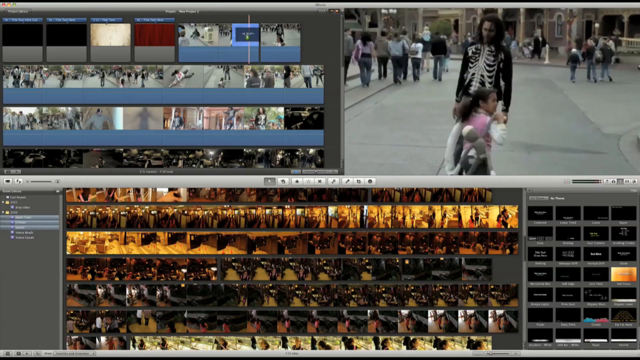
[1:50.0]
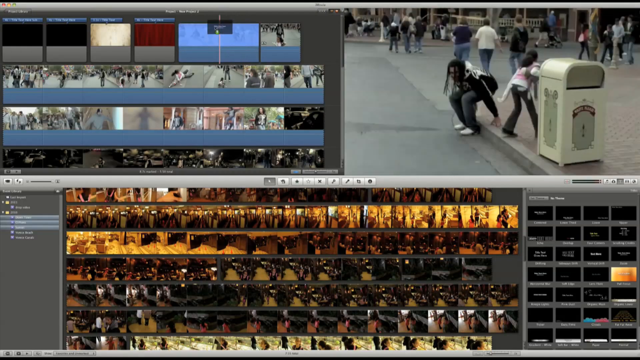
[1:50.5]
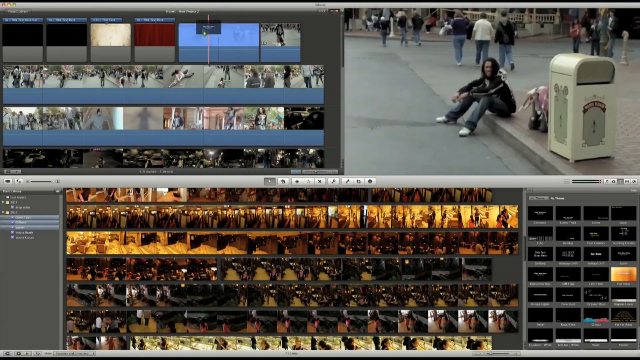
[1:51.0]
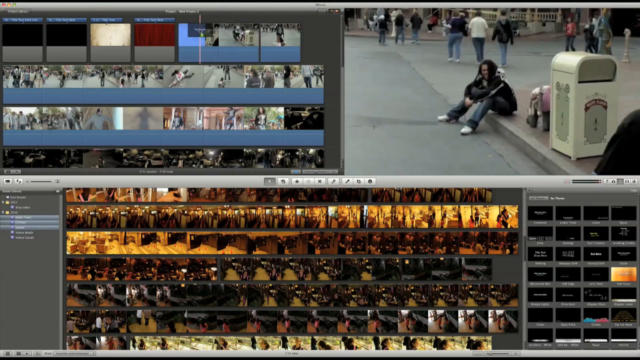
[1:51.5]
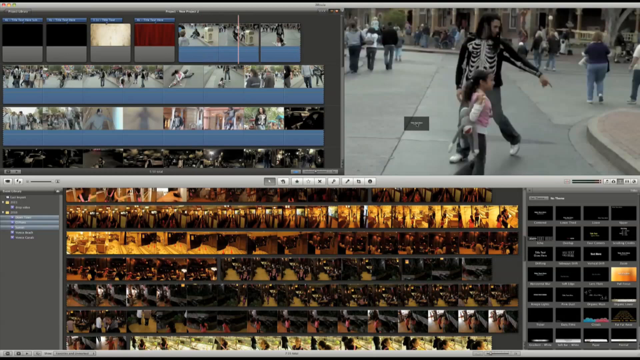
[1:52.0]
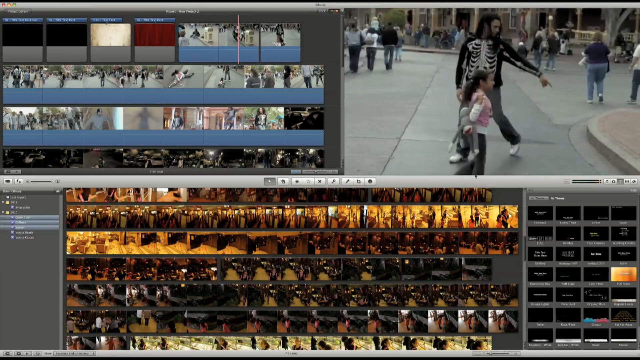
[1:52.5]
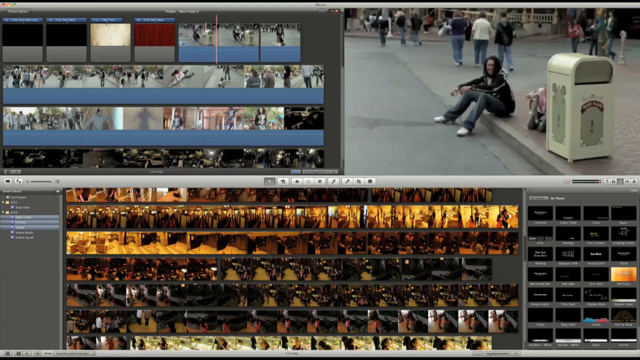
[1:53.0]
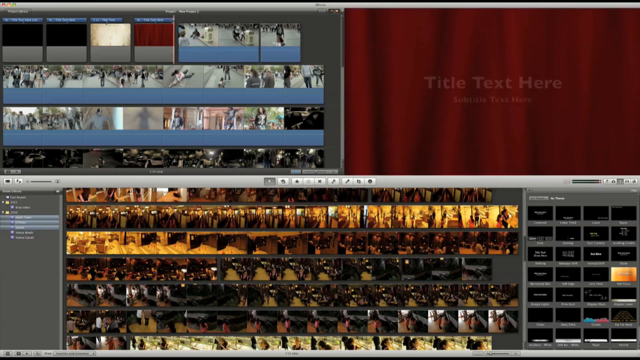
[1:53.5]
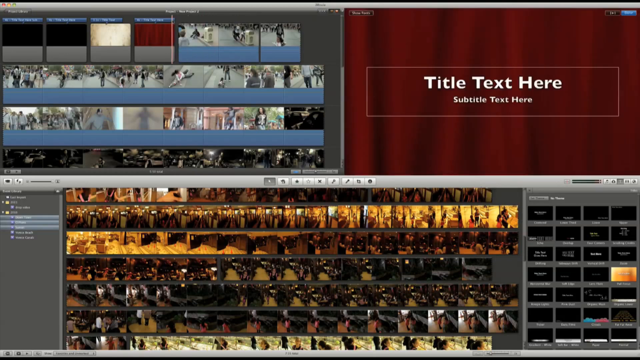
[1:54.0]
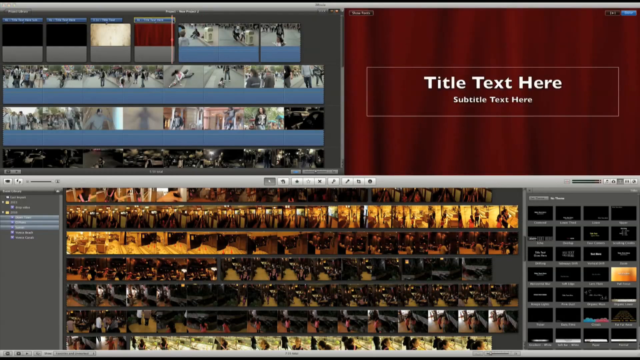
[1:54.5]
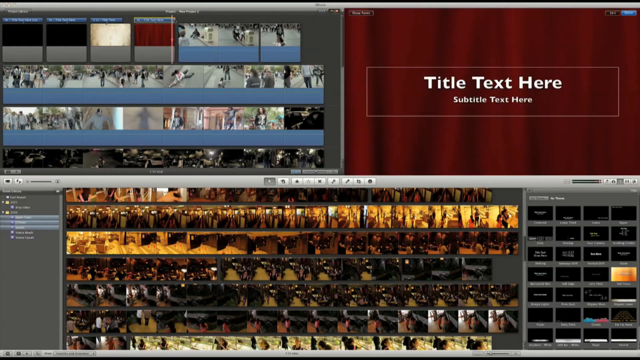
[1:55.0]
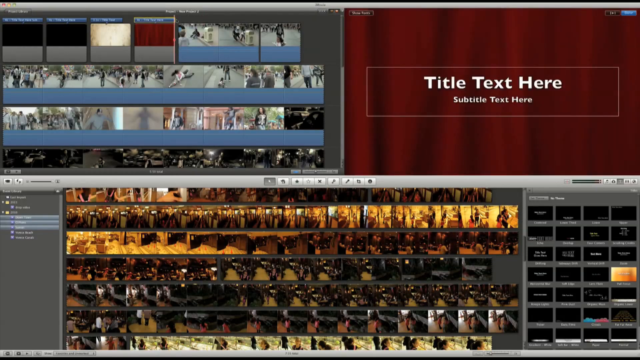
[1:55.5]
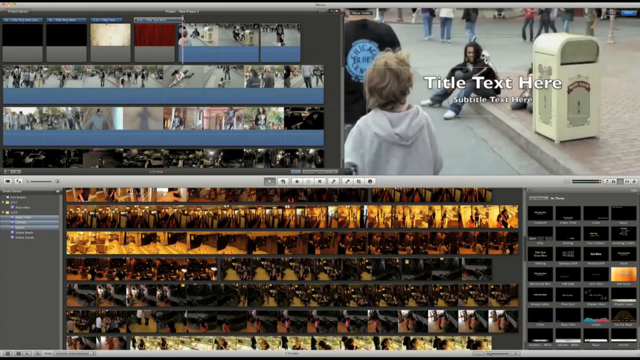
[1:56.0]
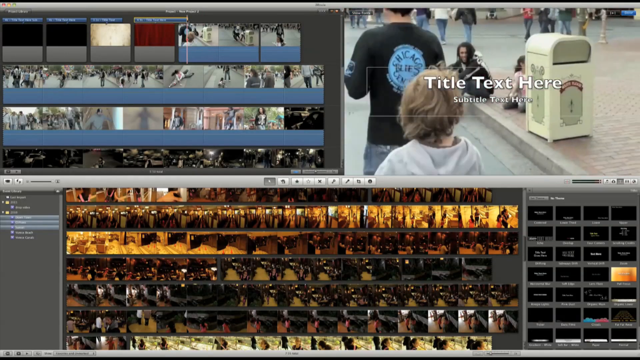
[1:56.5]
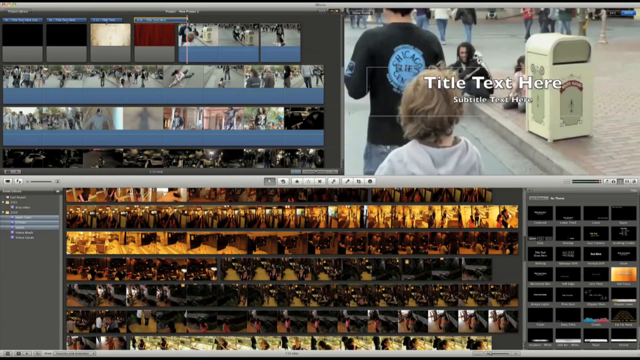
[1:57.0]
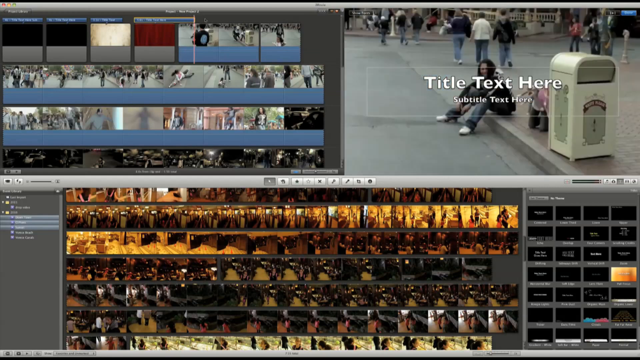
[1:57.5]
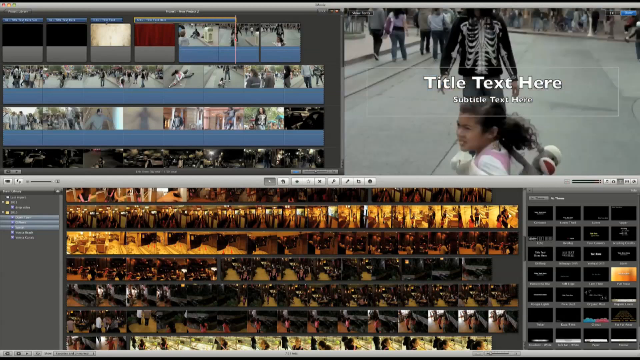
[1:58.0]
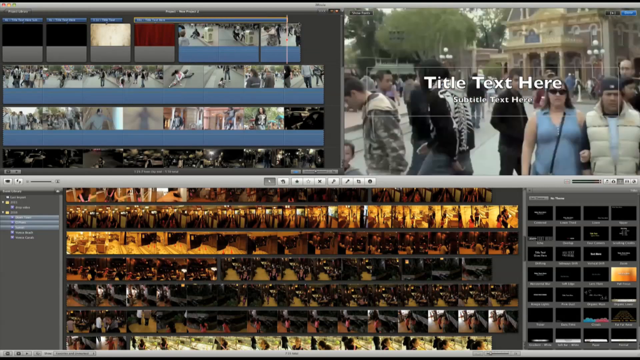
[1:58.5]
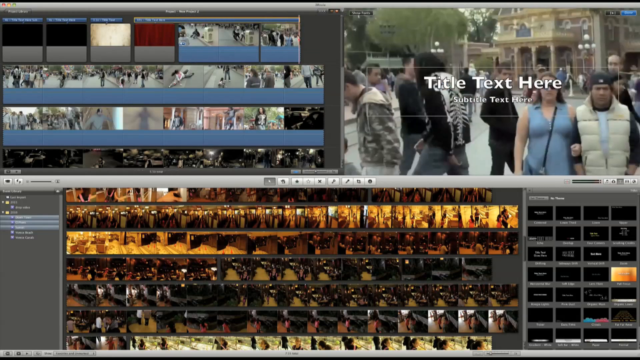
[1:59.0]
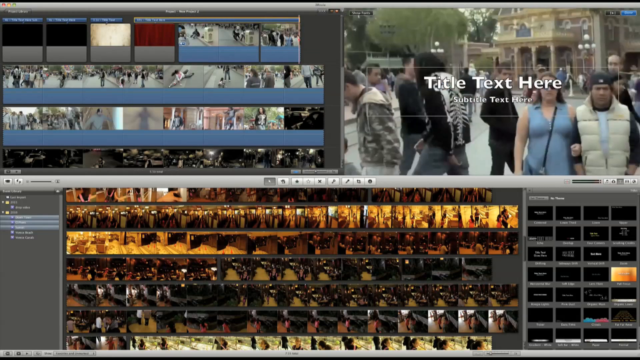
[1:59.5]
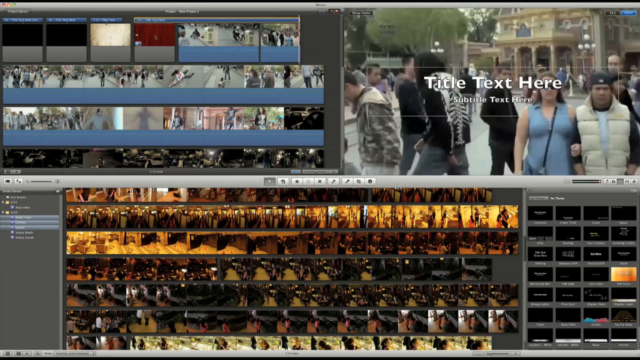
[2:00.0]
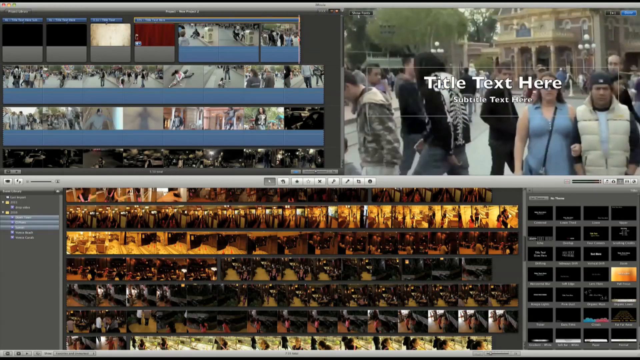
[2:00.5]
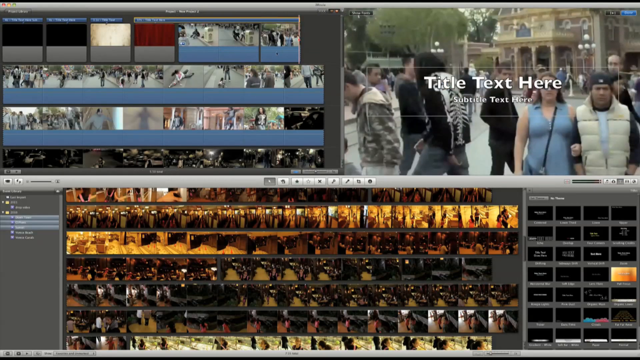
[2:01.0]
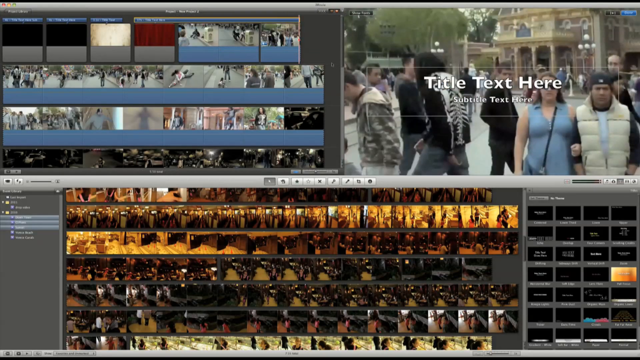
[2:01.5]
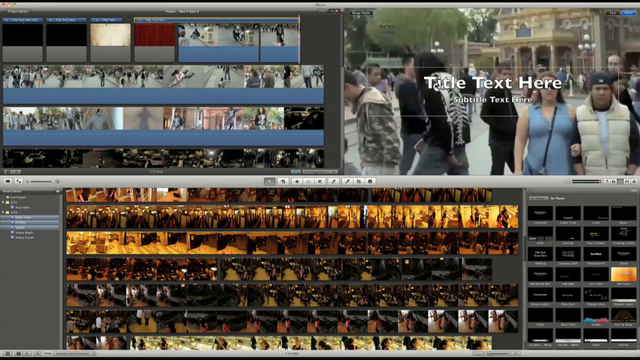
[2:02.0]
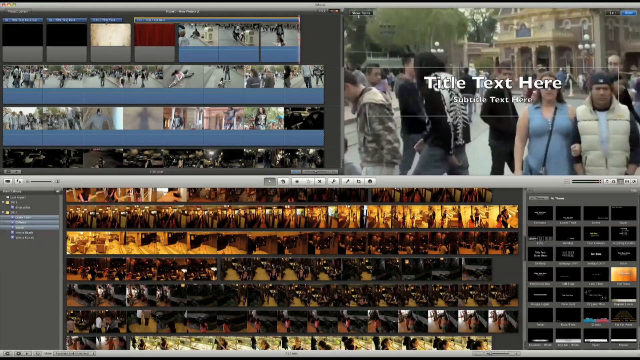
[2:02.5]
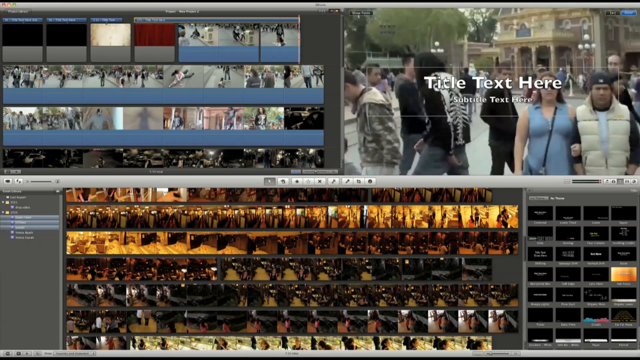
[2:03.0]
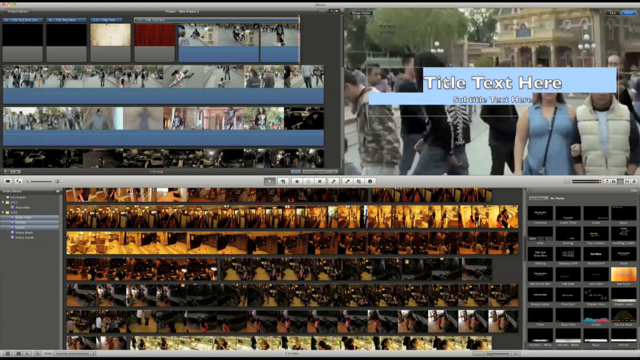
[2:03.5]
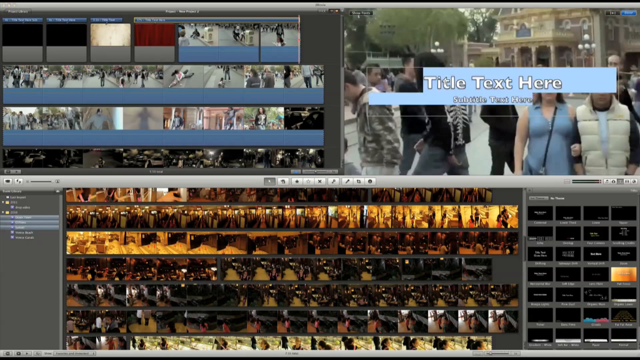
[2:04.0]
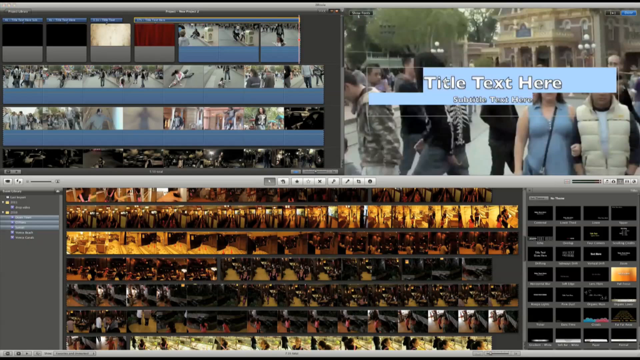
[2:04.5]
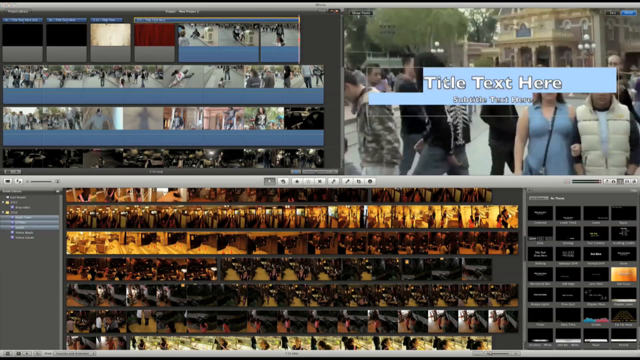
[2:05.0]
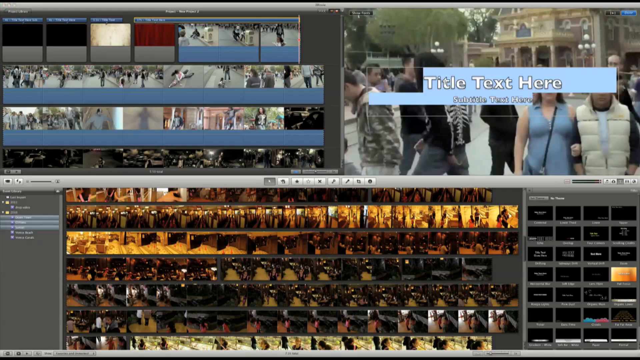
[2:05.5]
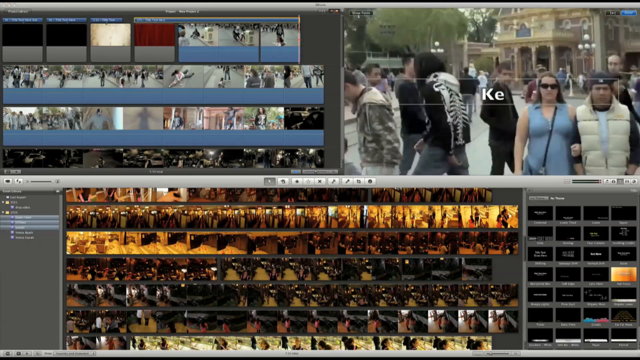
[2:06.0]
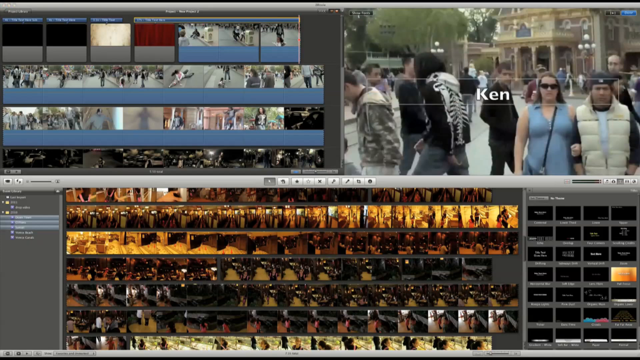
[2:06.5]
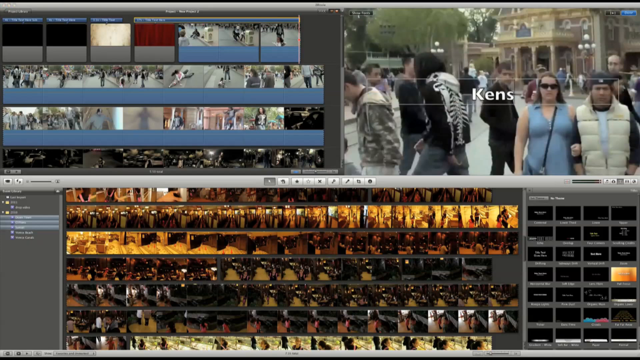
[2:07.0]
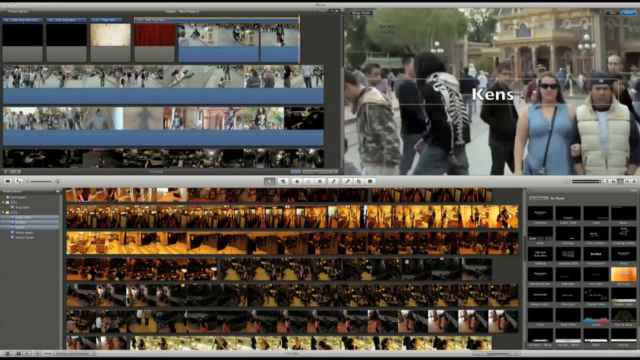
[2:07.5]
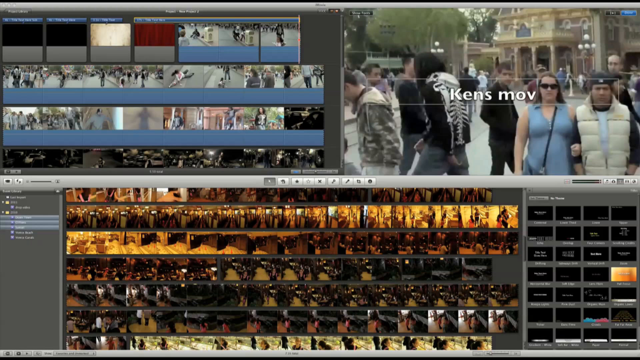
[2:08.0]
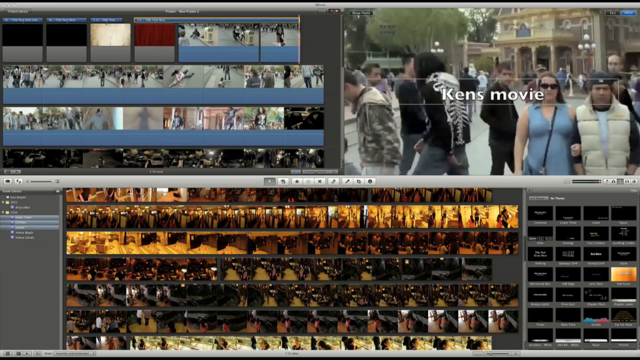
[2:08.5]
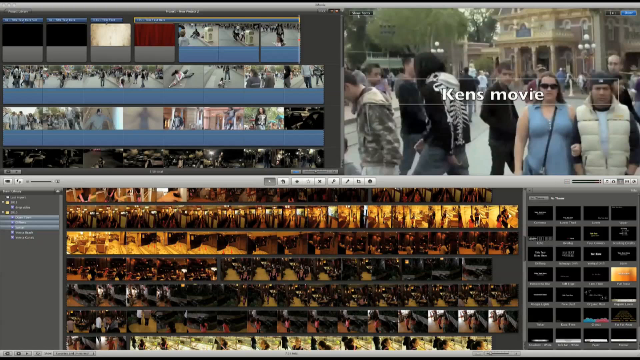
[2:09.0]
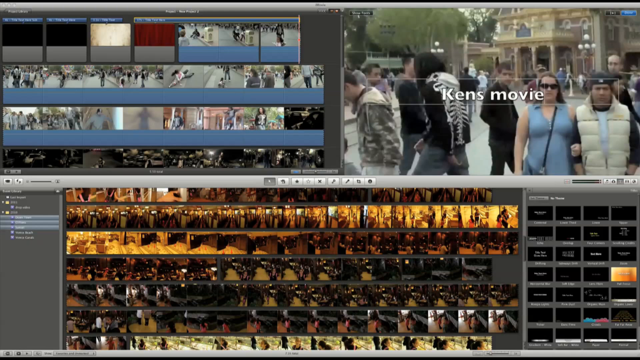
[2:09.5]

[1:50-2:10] The younger teenager wears a pink jersey and carries a backpack, sitting down. The title effect can be stretched from one scene to another or across the entire video; the effect section is marked with a blue highlight, and the effect appears throughout the highlighted section. Ken drags the text effect and enters the title "Kens movie". Many people walk along the street, mostly in pairs or groups and in different directions. One couple holds hands: the woman wears a blue dress, and the man wears a black and white T-shirt and a white pullover.